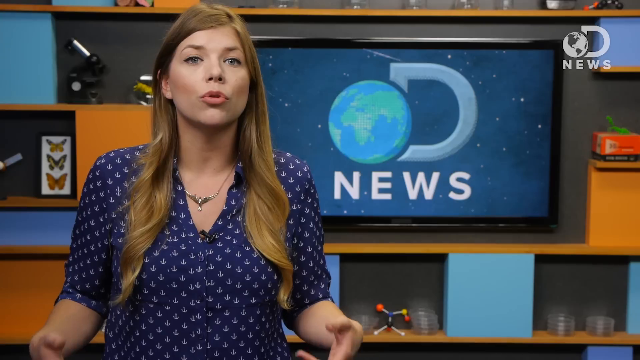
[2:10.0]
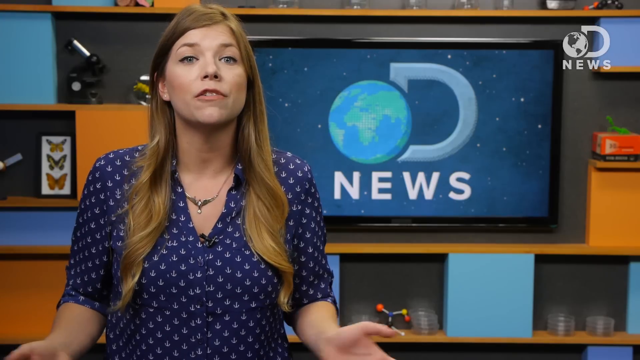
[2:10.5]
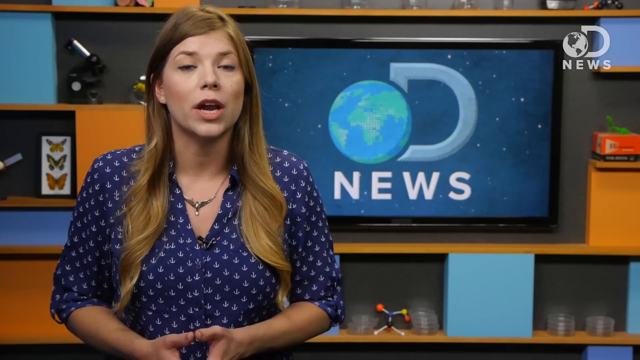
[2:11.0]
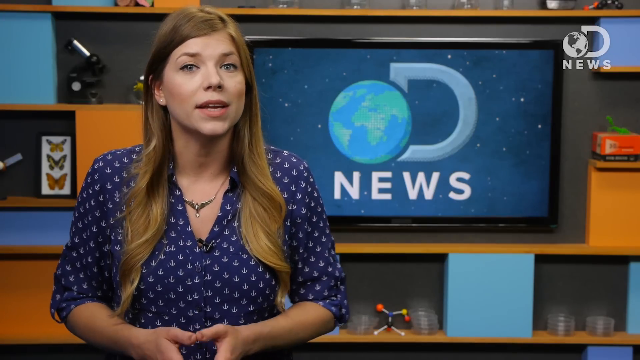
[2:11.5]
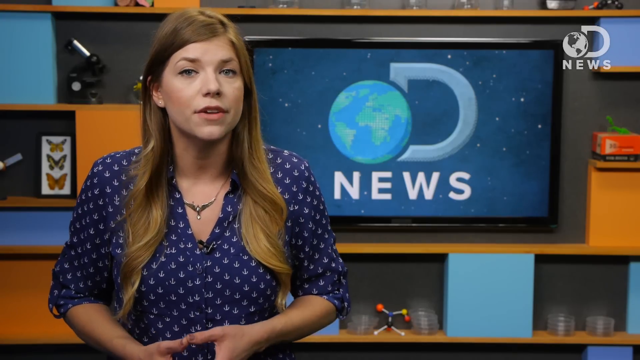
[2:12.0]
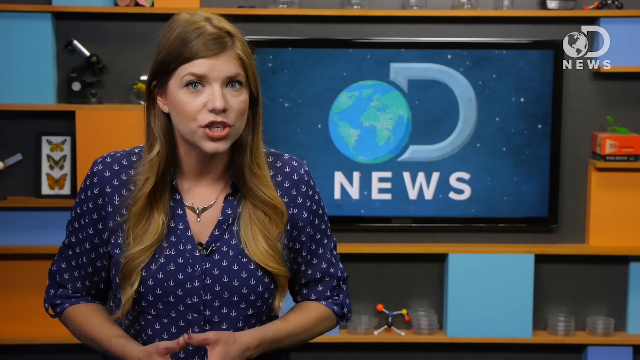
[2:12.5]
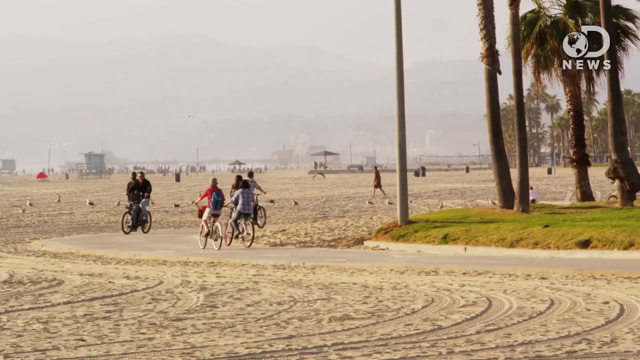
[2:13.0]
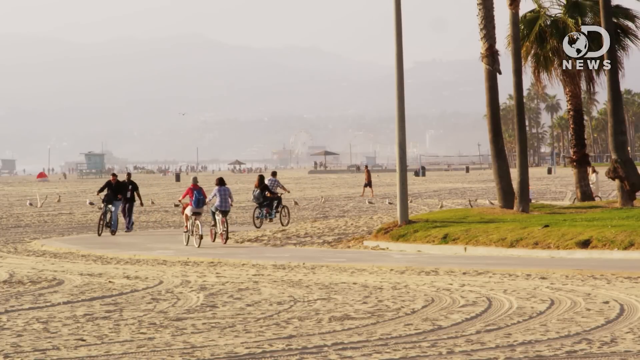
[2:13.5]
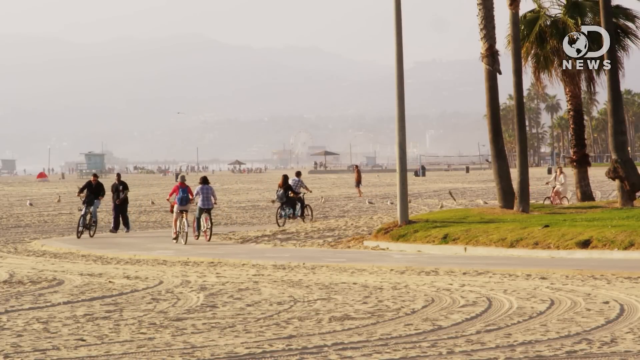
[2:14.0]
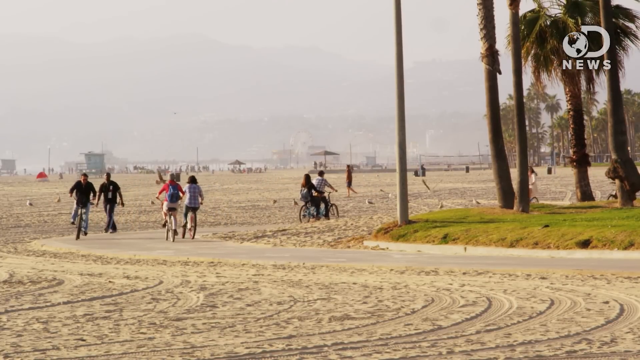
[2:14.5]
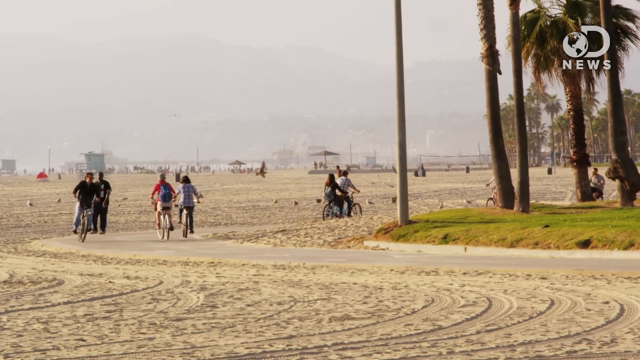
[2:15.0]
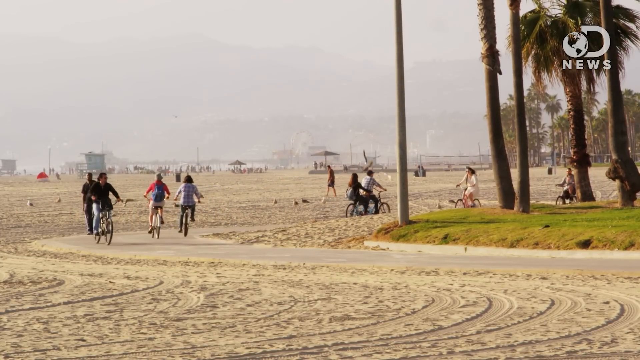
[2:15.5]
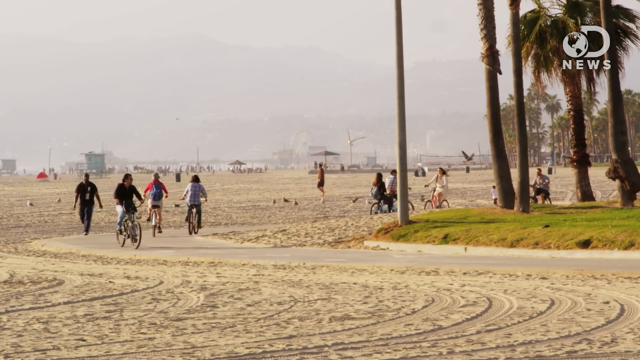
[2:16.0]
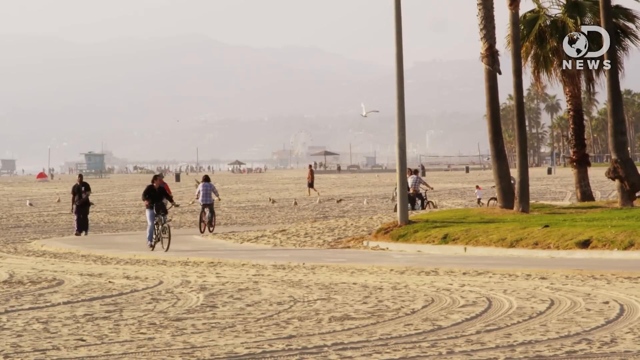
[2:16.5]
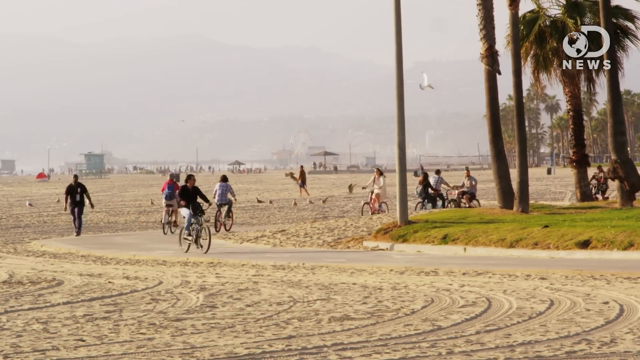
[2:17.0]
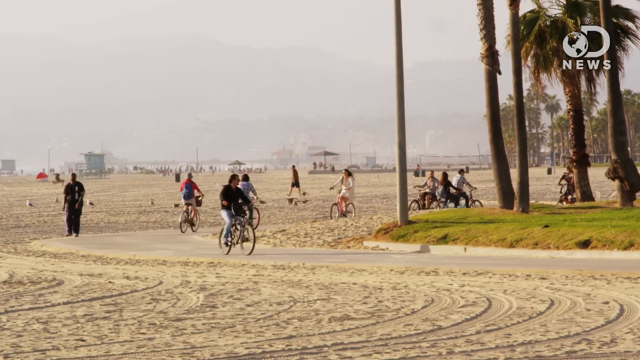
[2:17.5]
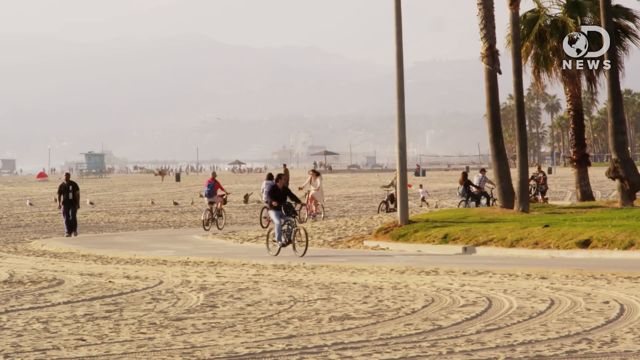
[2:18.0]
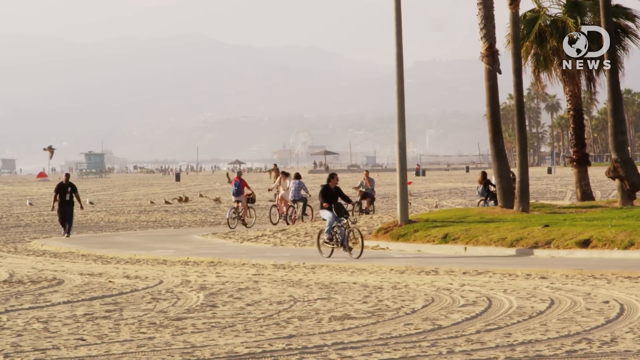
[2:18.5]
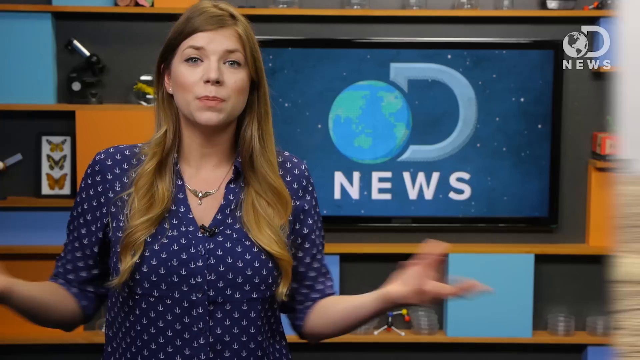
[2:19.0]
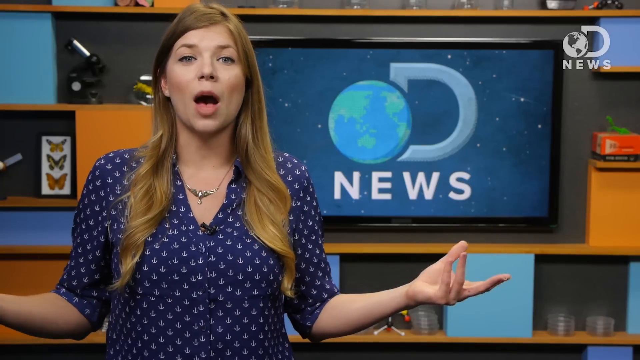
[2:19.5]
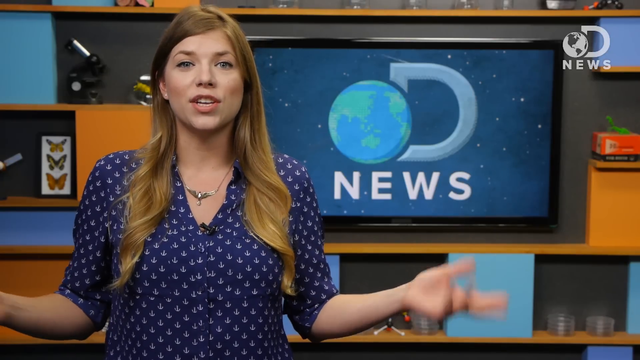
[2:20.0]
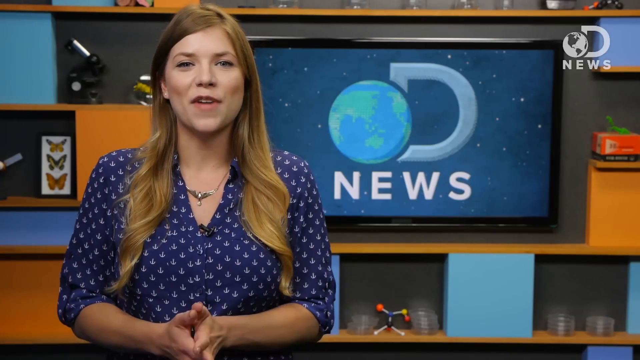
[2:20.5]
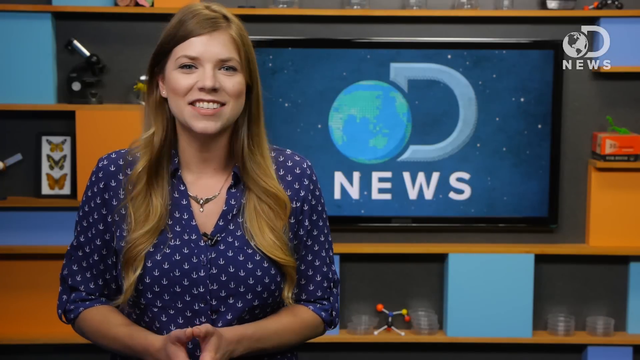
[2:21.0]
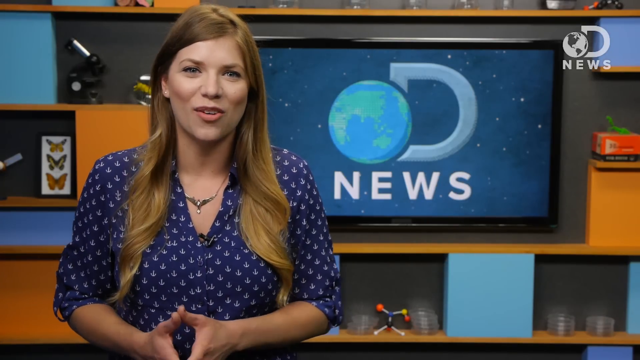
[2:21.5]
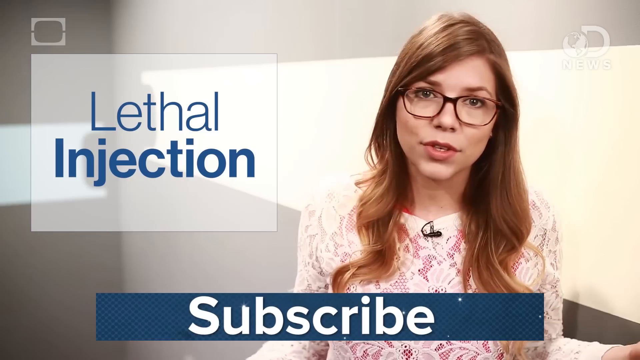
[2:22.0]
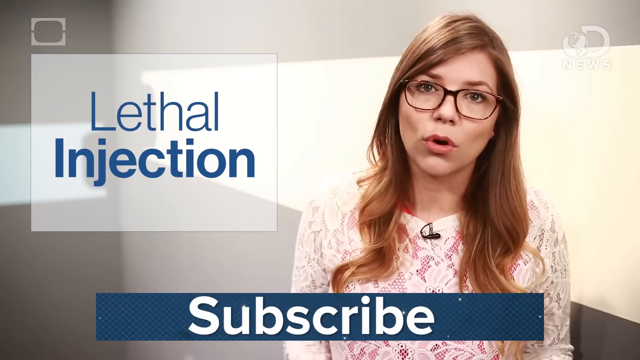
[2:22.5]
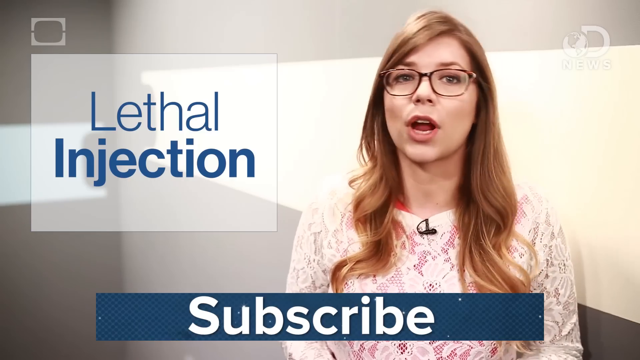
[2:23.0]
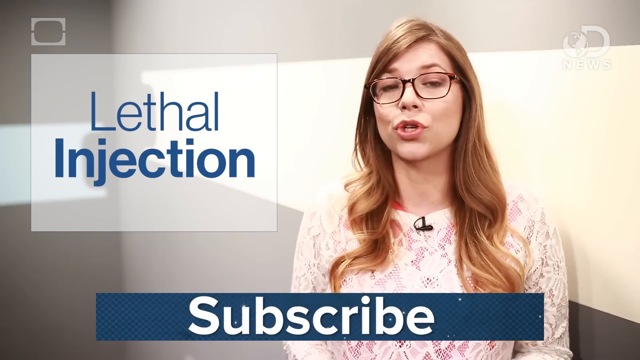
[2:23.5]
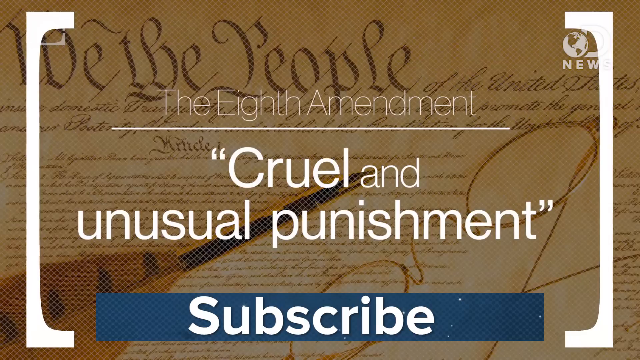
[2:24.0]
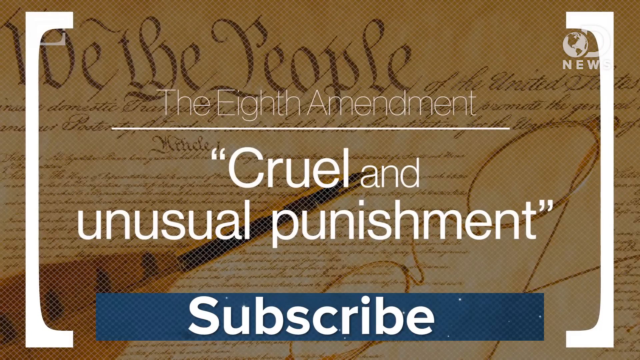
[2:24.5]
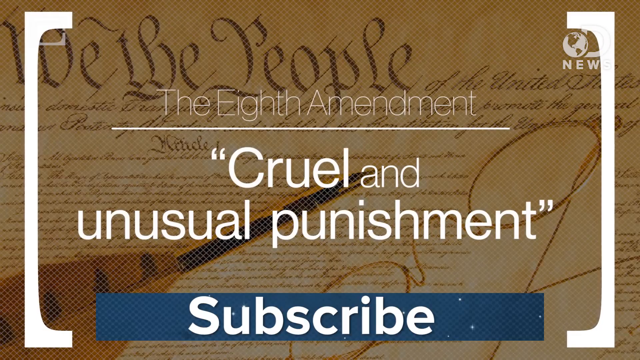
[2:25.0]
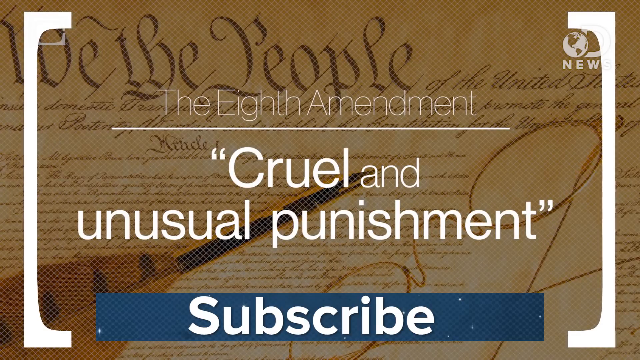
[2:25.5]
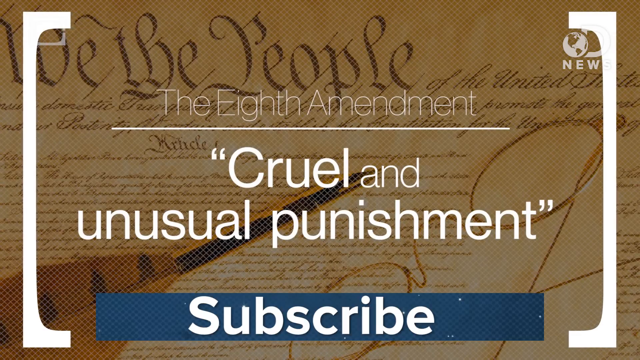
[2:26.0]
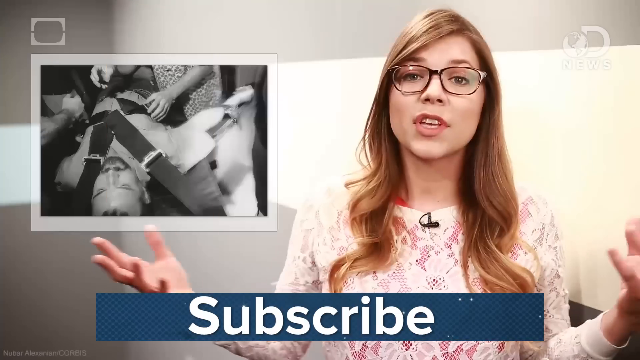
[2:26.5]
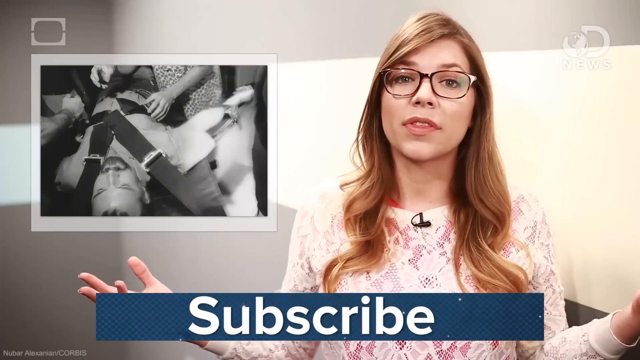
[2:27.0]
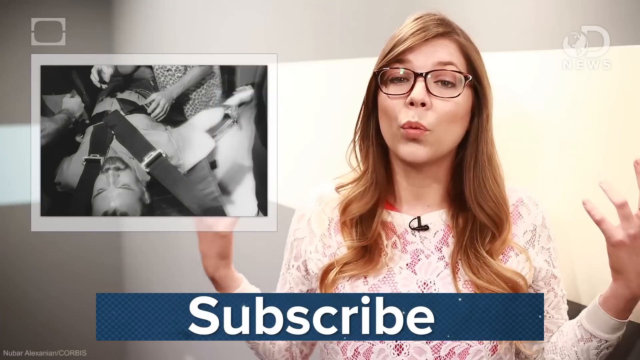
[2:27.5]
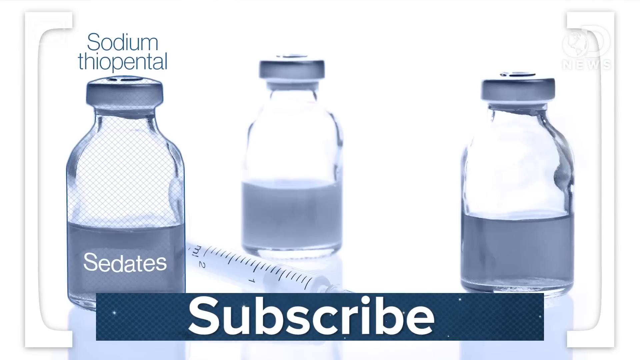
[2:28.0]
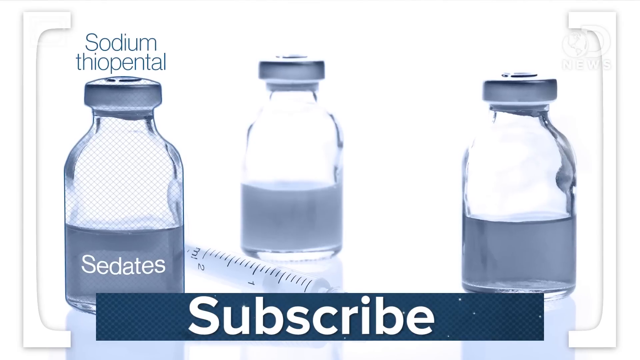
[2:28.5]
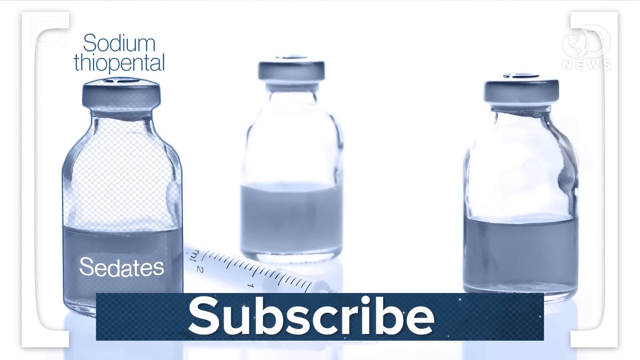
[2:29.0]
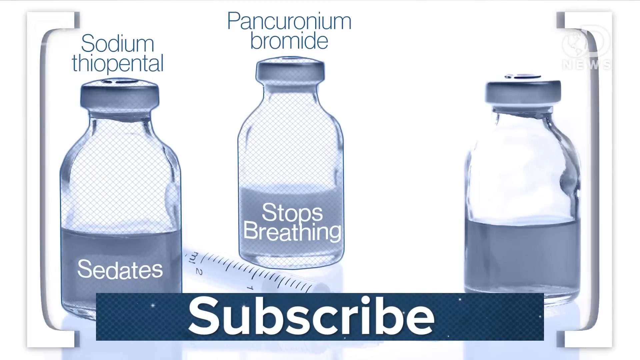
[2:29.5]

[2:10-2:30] The Discovery News logo with a big D appears and the woman is talking. A sandy beach appears with sand, green grass and trees under a very foggy sky. About three pairs of two people ride bicycles, and there are birds on the sandy beach, with birds and people walking all over it. Then some sort of program on lethal injection appears: on the right is a long-haired woman with glasses and a white fabric shirt, and "subscribe" is shown in a blue rectangle with white text. An infographic at the top reads "the eighth amendment" with "cruel and unusual punishment" in quotes, and "Discovery News" is at the top, with apparently the Constitution in the background. On the left is a man with straps and buckles on his chest. At the top left is "sodium thiopentyl" with three vials, and at the far left "sedates".